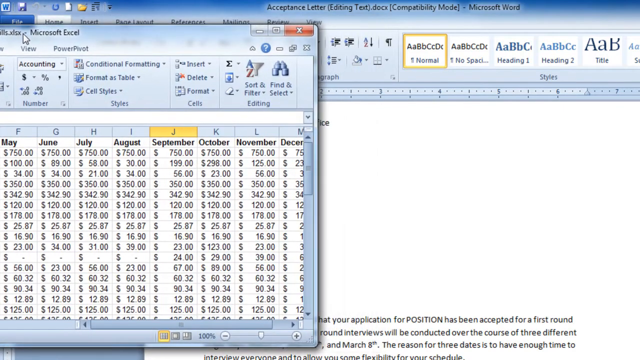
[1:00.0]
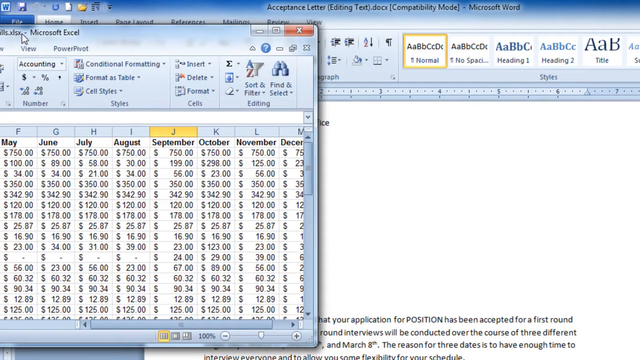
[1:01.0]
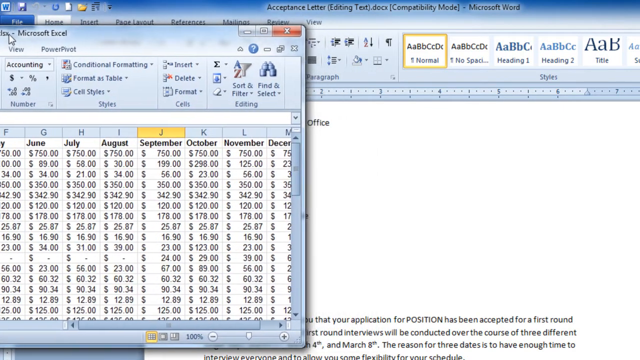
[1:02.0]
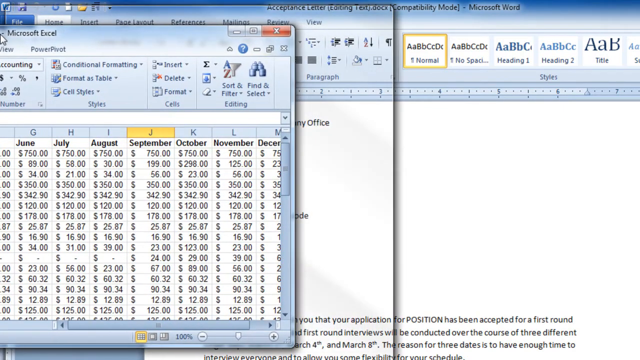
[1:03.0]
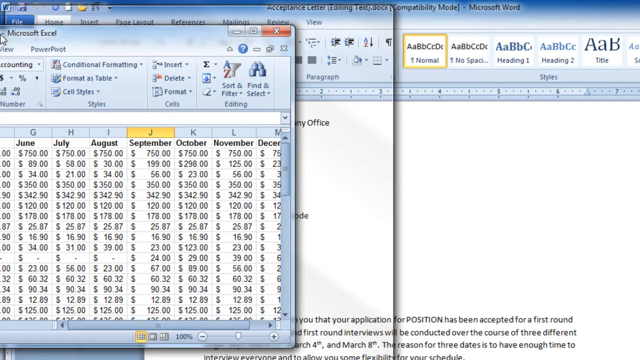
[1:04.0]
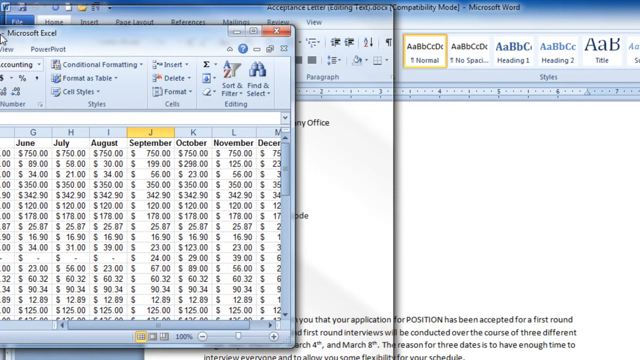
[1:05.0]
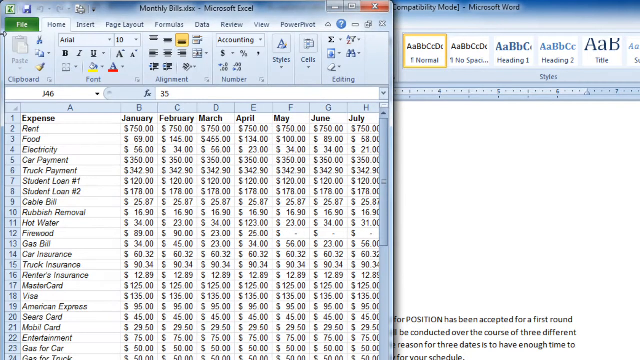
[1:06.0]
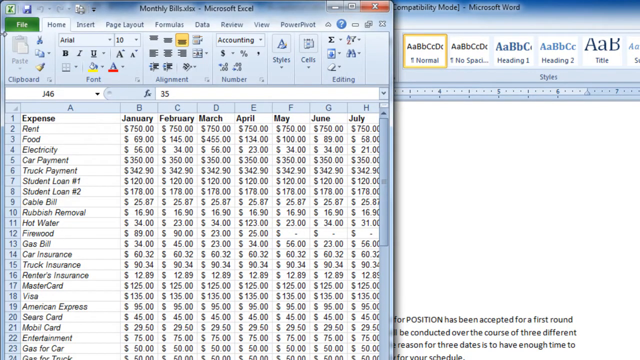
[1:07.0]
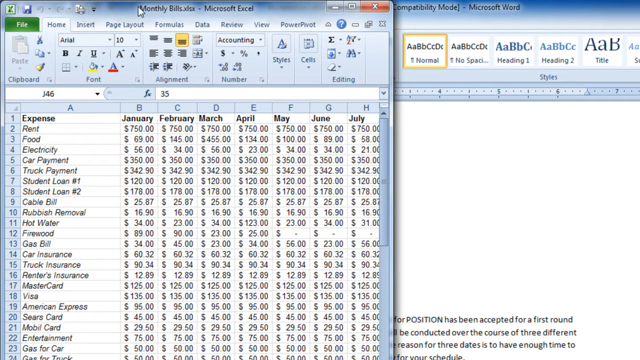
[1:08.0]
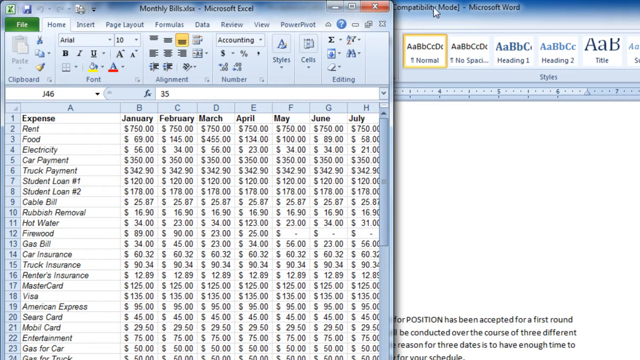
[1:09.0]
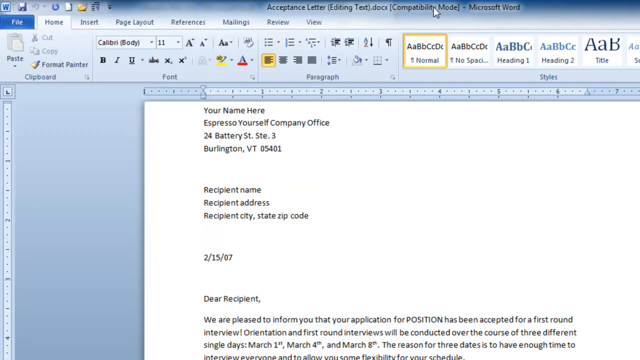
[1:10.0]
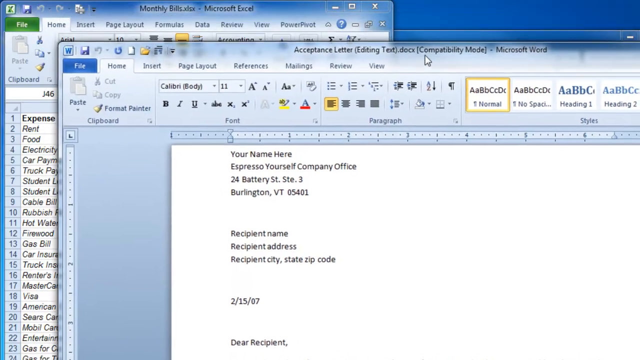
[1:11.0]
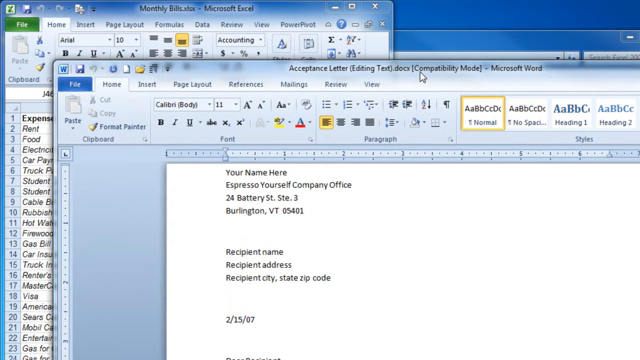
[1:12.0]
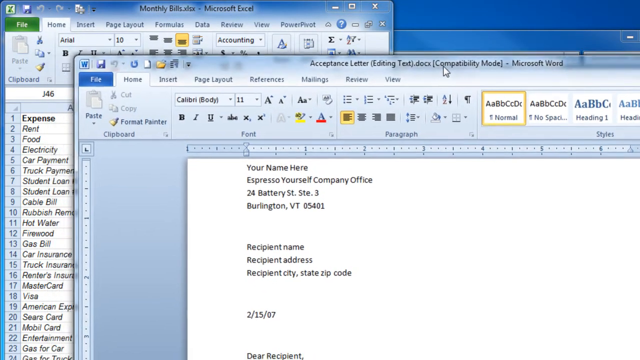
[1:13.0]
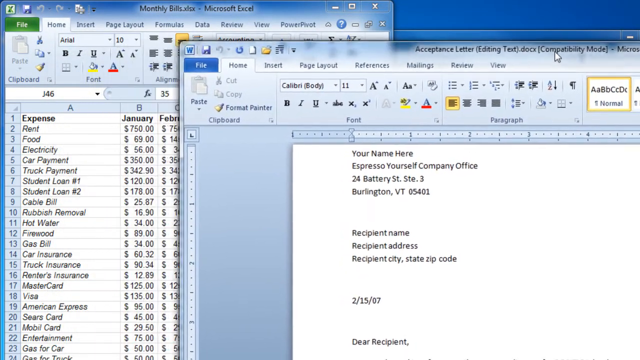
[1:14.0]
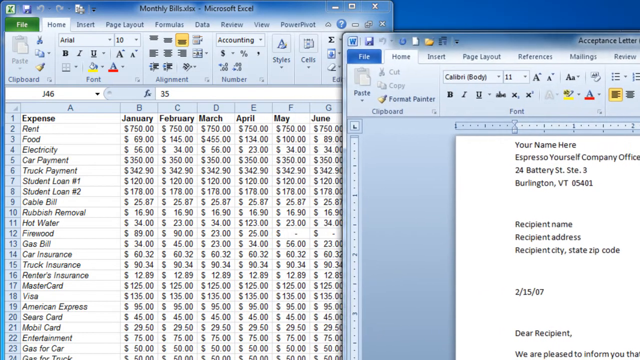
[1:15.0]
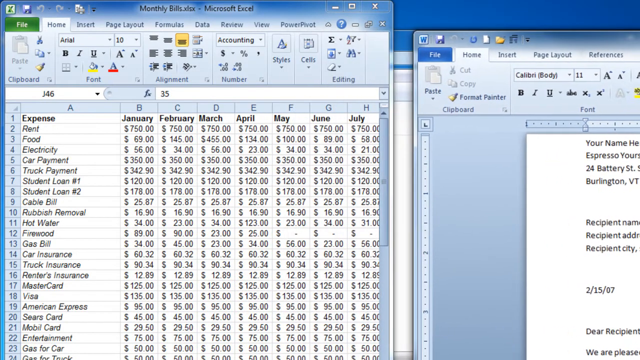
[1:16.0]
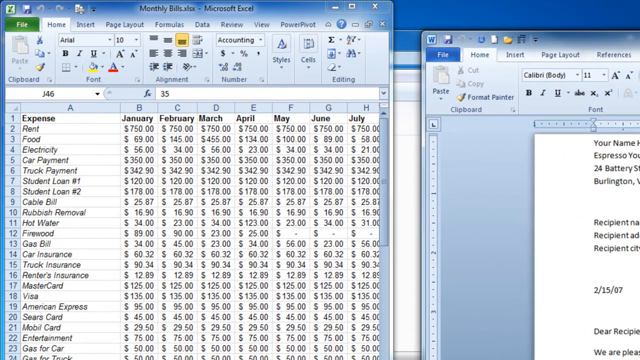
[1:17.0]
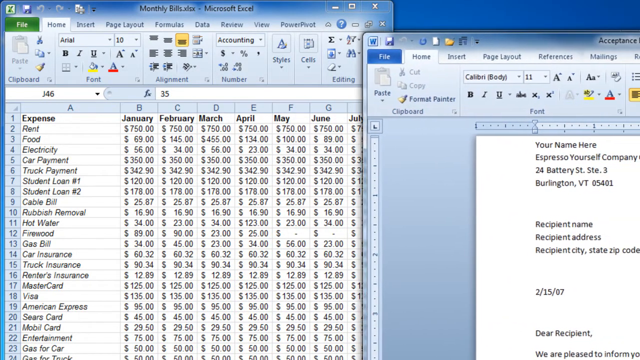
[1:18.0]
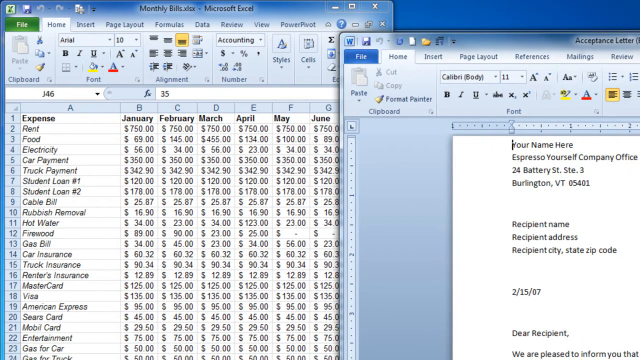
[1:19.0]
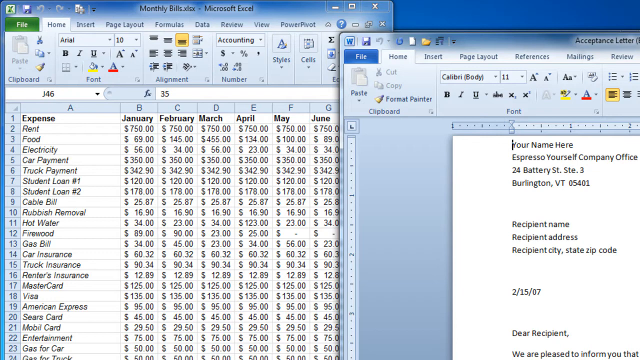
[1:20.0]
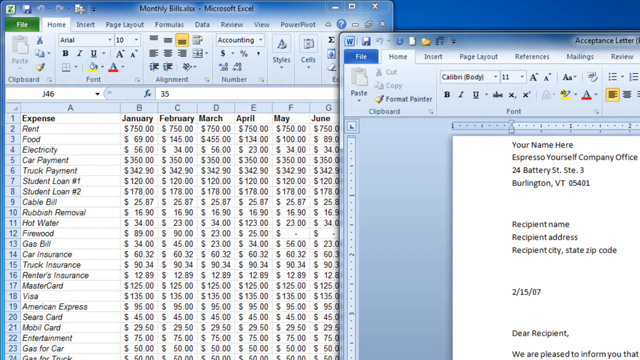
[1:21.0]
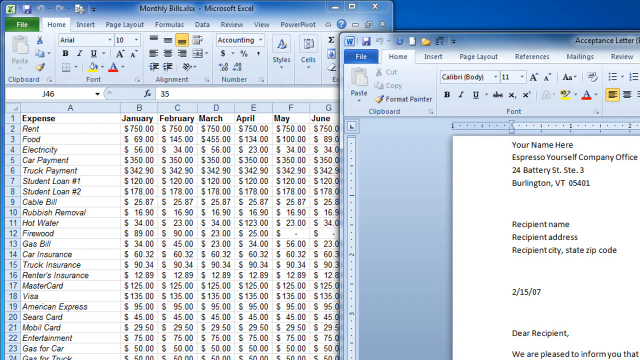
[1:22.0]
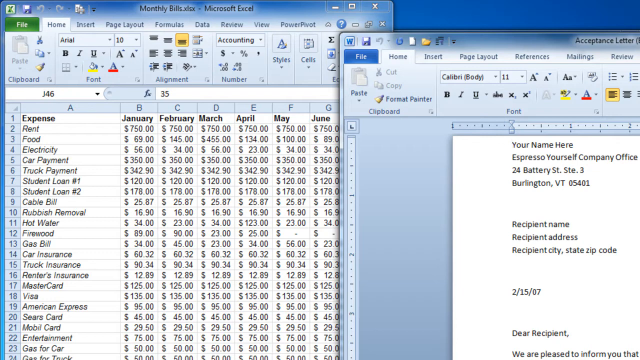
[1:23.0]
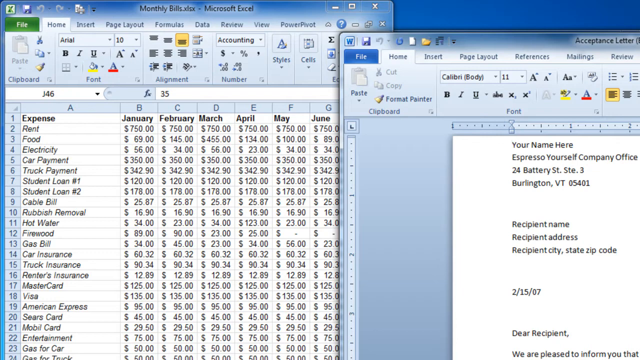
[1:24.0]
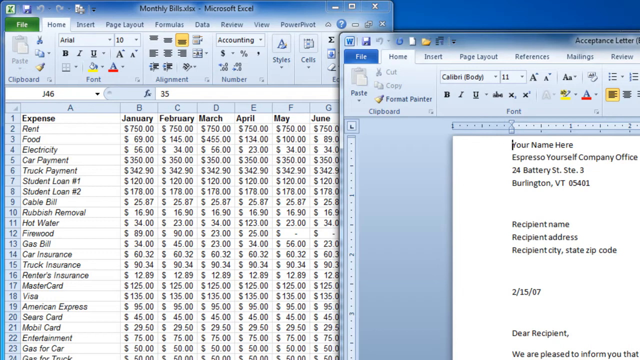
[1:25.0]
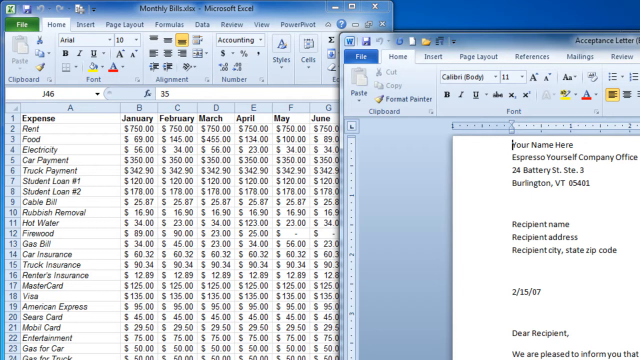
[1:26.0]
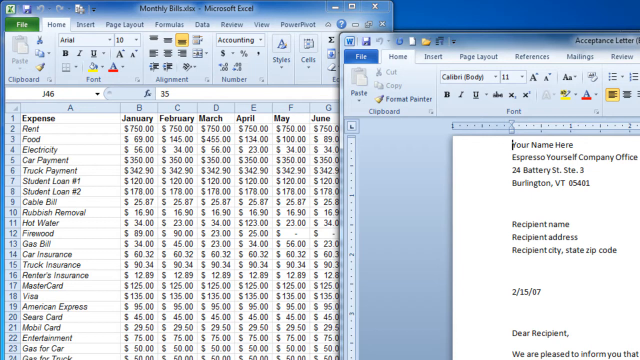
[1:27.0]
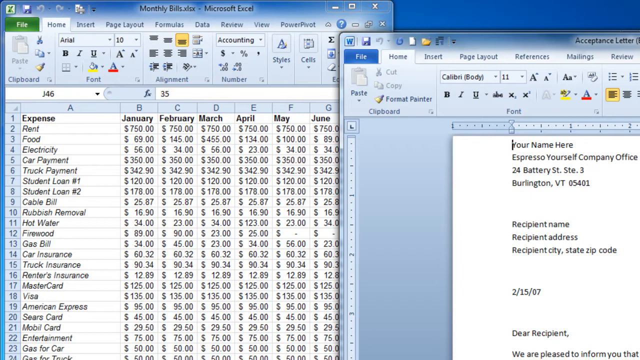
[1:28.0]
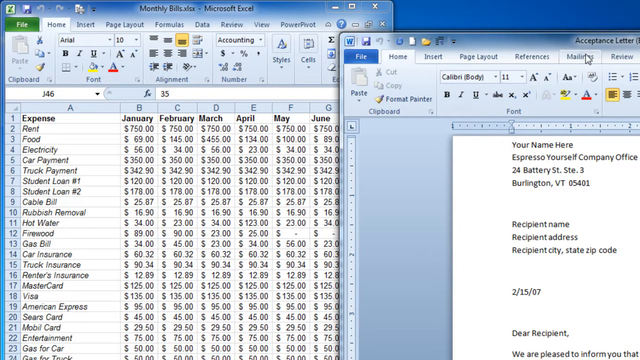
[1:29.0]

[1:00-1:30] The overlaying monthly bill box has been moved a little to the left. He clicks the top bar where the budget title is and holds it down, continuing to move the box to the left. He then goes to the top and highlights in yellow the indentation option underneath the formula button. Below the clipboard is a drop-down box reading "J46" with a drop-down arrow, followed by a function symbol and a text field that says "35". He moves the cursor over to the part reading compatibility mode, which is the Word document, and clicks it; the monthly bill window that was on top is now behind it, as the Word document becomes the active one. The document contains several lines of text, including "your name here", laid out almost like a business card for a fake city and business, along with recipient name, address, city and a date, so it appears to be a professional-looking letter about to be typed. He clicks and holds the top of the window, moving it down to the left and then to the right, sliding it until most of the document is cut off, leaving five options visible from references to file on the left. He then clicks, drags and releases again, and now the visible tabs extend through review. The text cursor blinks just to the left of "your name here" in the Word document. He then clicks another area, and it moves to a different part of the document.